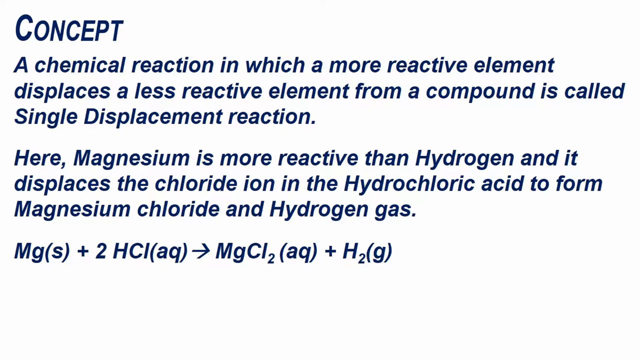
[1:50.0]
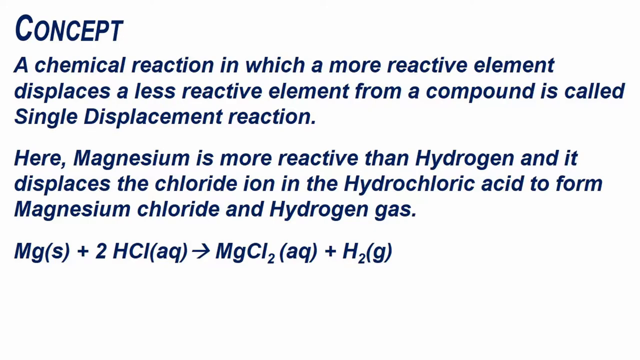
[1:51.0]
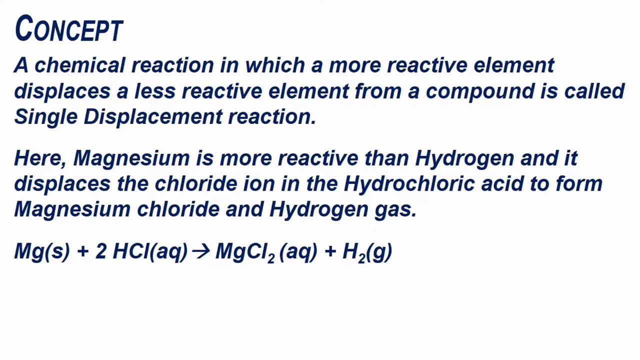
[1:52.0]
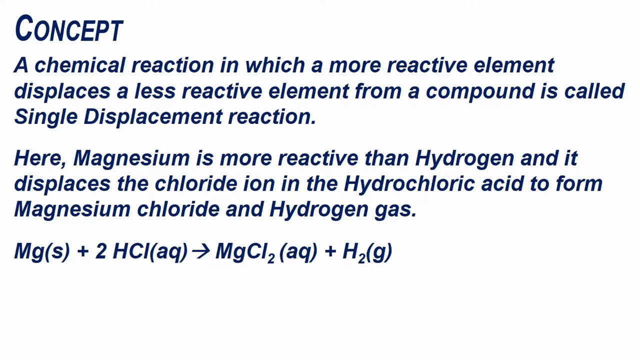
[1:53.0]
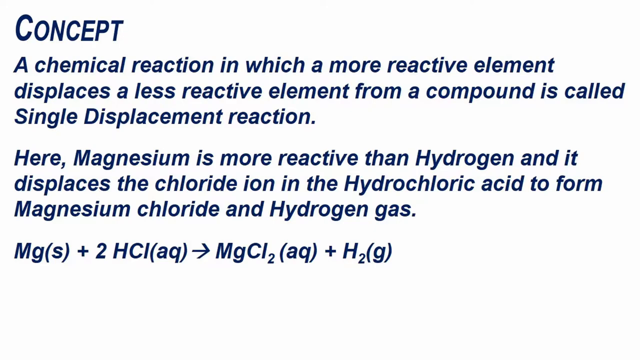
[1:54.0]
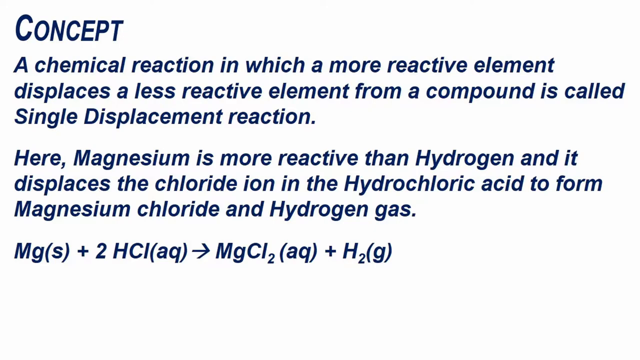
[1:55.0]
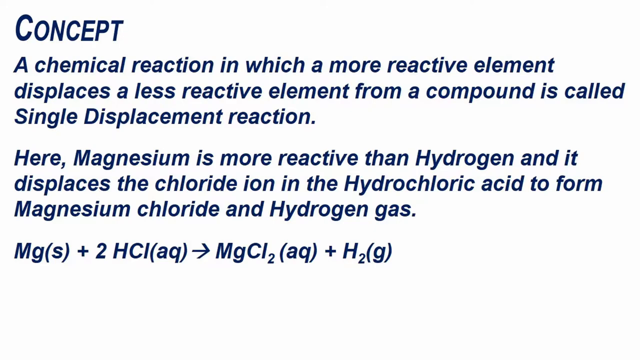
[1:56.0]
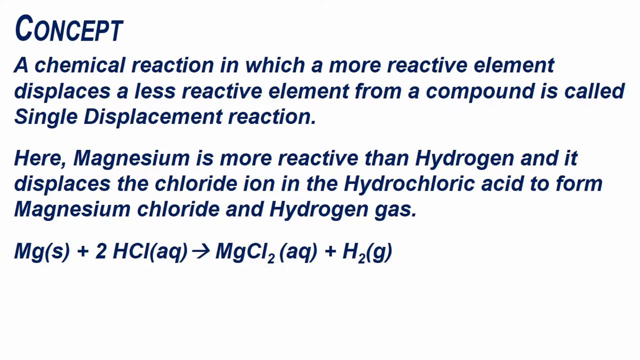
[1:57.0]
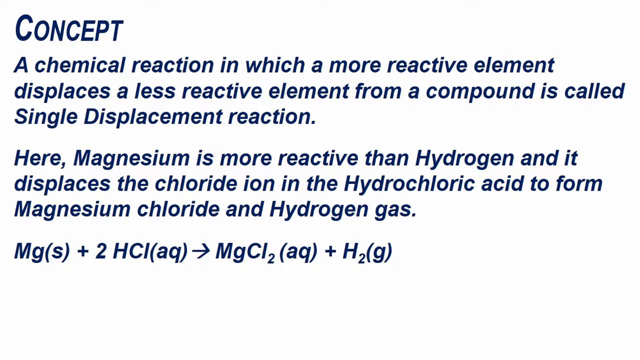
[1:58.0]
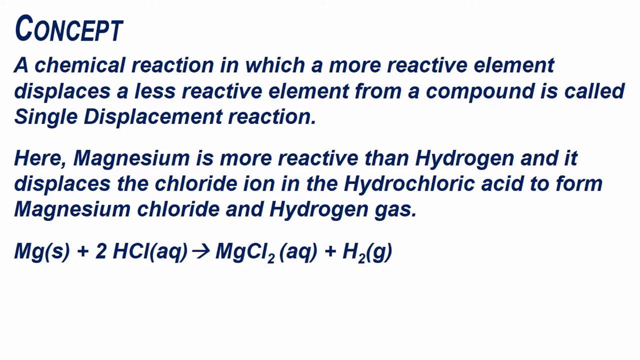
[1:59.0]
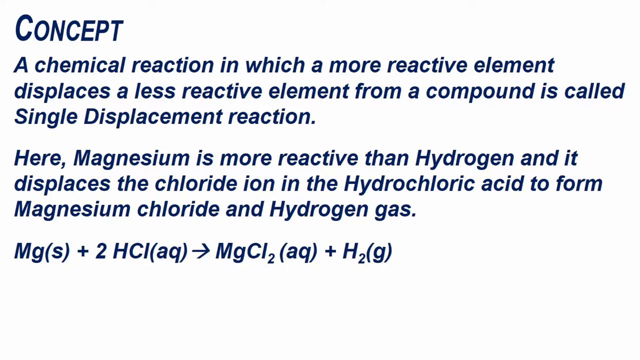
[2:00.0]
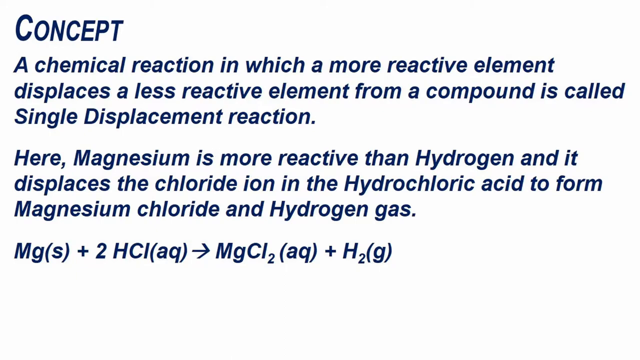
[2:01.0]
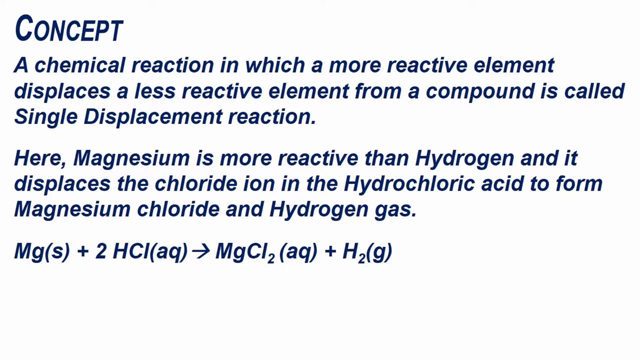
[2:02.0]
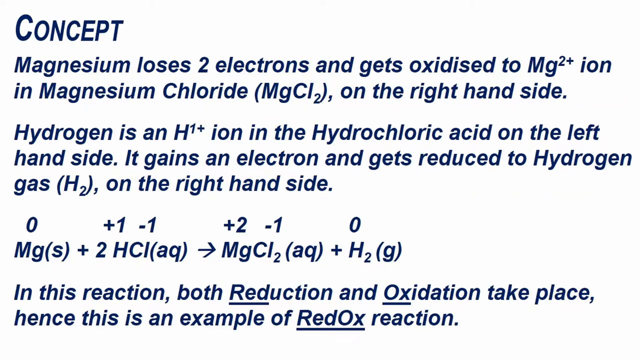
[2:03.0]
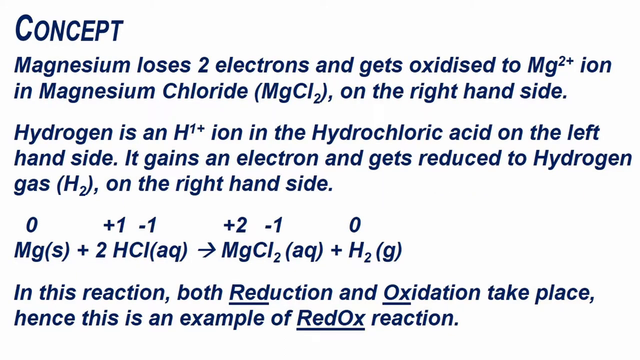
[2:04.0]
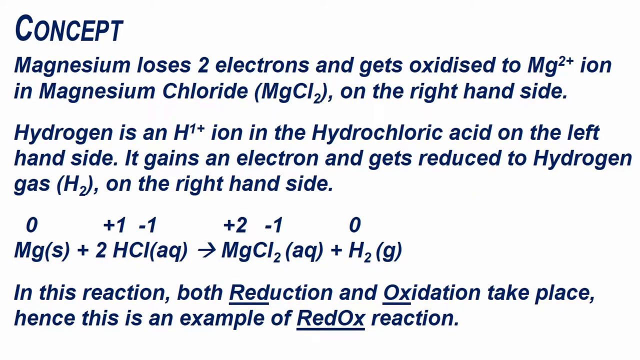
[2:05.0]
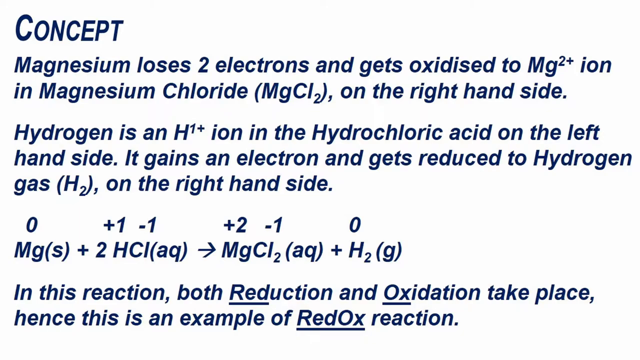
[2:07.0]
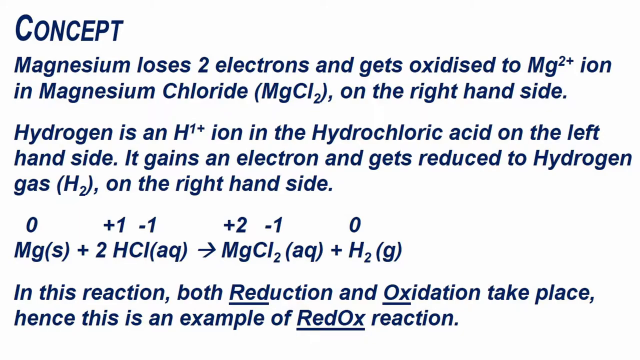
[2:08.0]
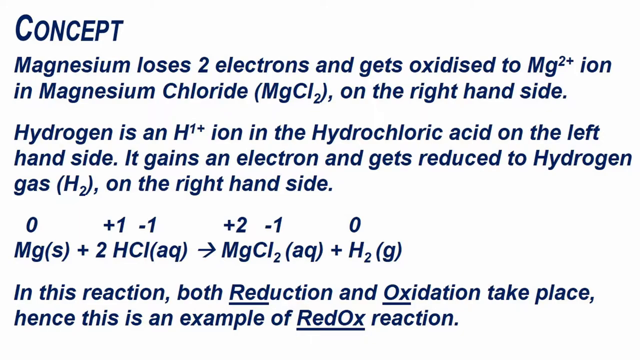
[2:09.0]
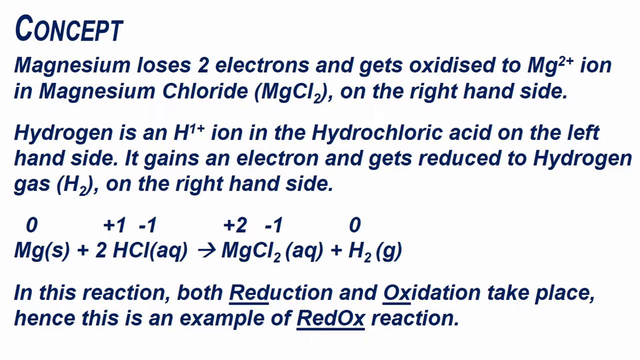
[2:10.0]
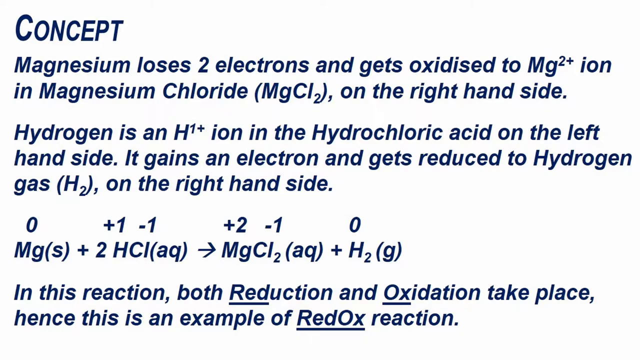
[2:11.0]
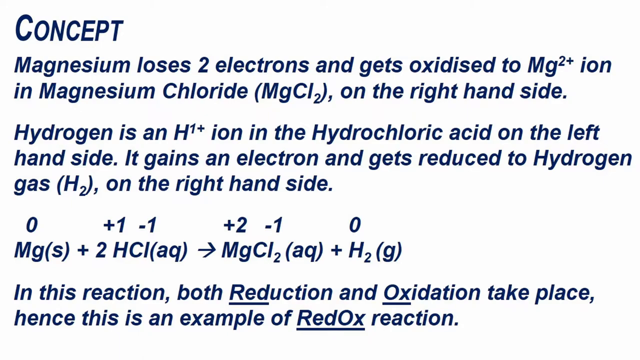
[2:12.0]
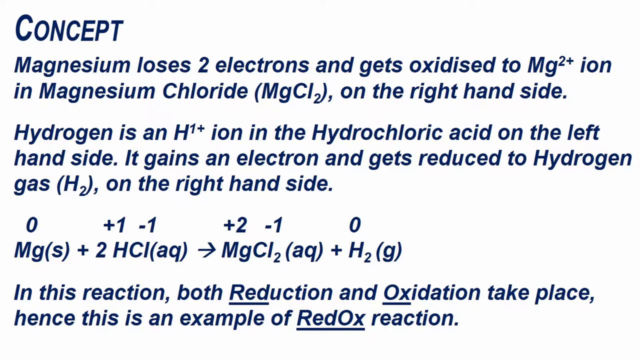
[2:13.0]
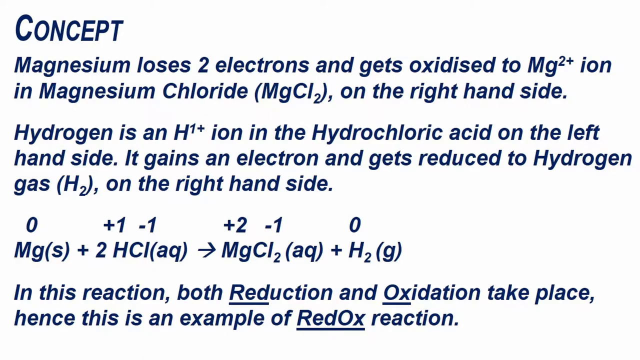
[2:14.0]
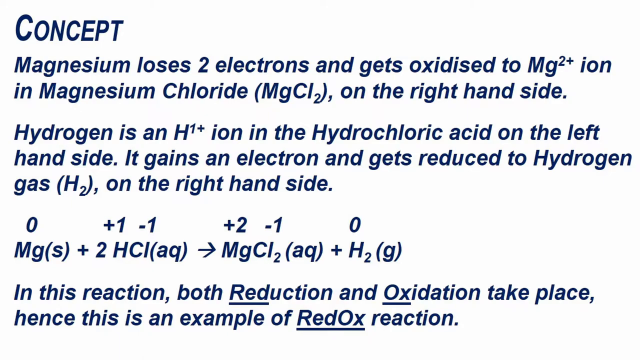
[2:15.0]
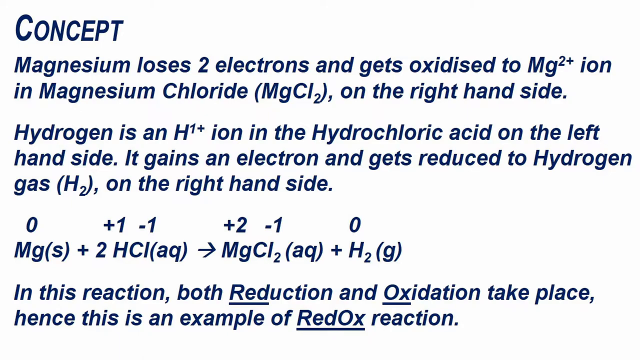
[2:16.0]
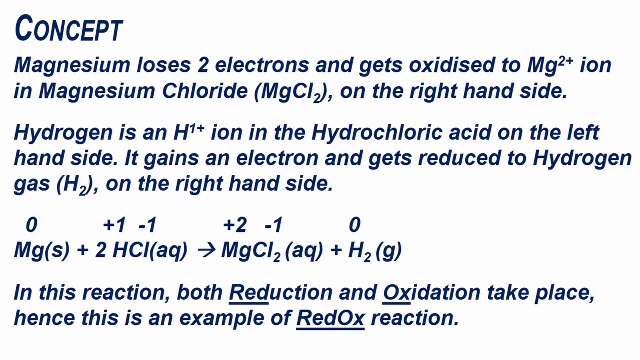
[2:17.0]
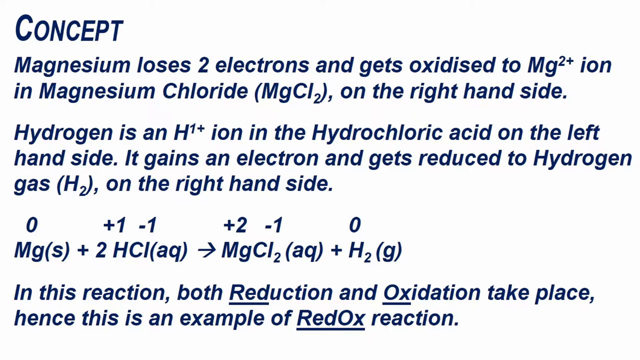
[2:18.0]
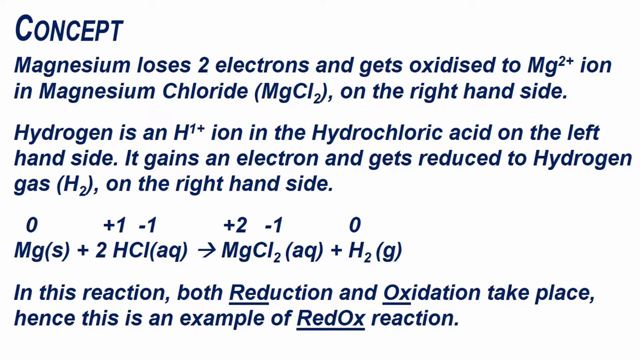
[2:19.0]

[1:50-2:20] A white background with dark blue text explains a concept and includes a chemical composition. It reads "magnesium loses two electrons and gets oxidized to Mg2 plus ion in magnesium chloride, MgCl2, on the right hand side," and continues about hydrogen, which "gains an electron and gets reduced to hydrogen gas, H2, on the right-hand side." This is followed by the chemical equation, and the text ends with "in this reaction, both reduction and oxidation take place. Hence, this is an example of a redox reaction." The video advances to another white background with blue text reading "Concept. A chemical reaction in which a more reactive element displaces a less reactive element from a compound is called single displacement reaction. Here, magnesium is more reactive than hydrogen, and it displaces the chloride ion in the hydrochloric acid to form magnesium chloride and hydrogen gas."